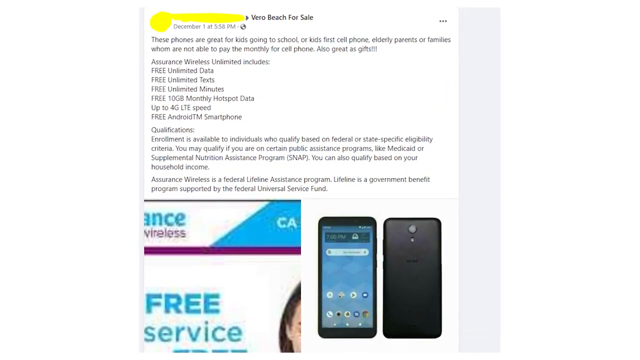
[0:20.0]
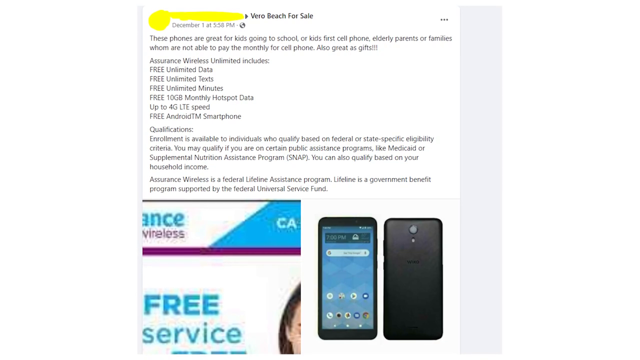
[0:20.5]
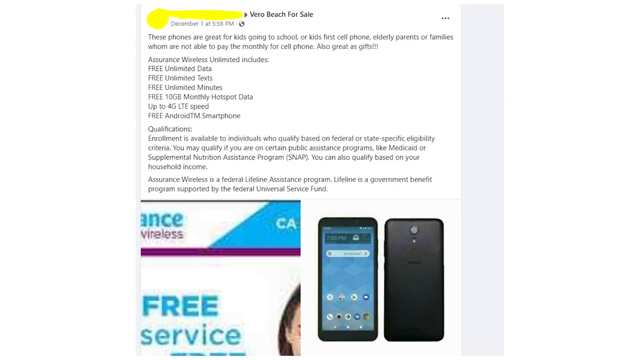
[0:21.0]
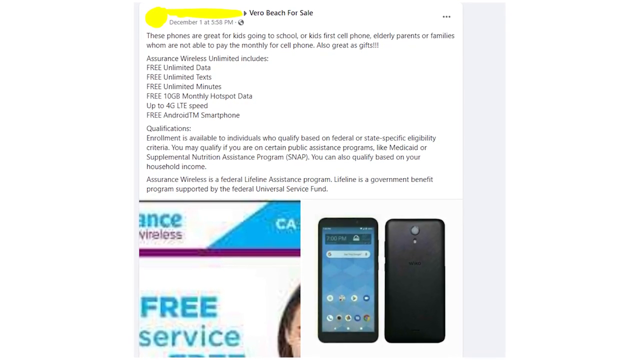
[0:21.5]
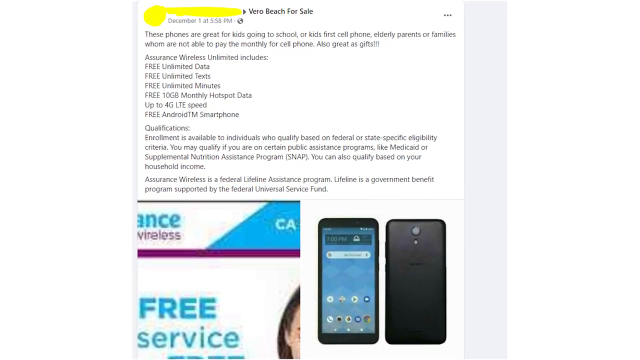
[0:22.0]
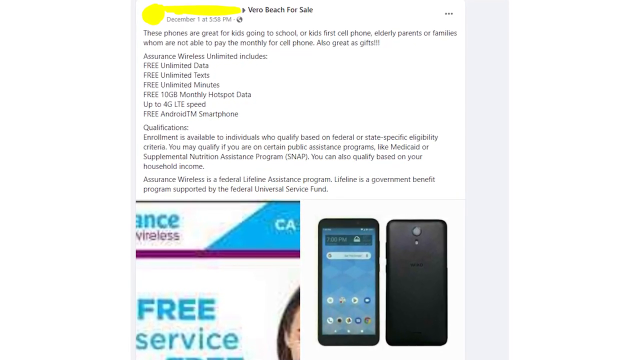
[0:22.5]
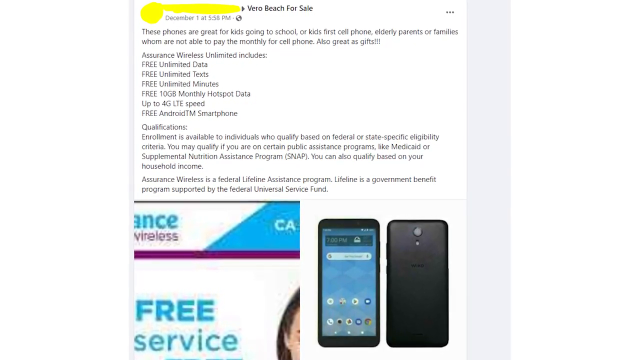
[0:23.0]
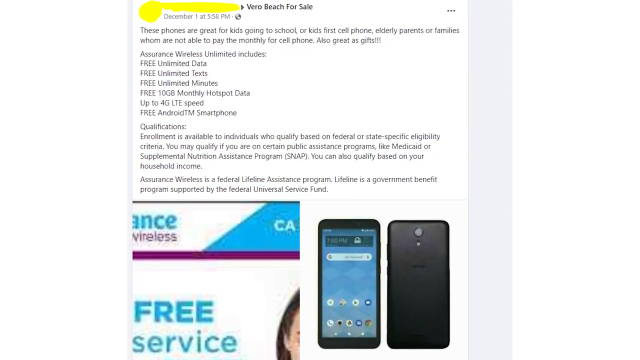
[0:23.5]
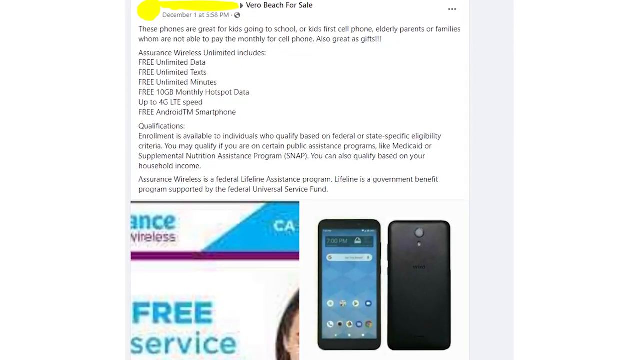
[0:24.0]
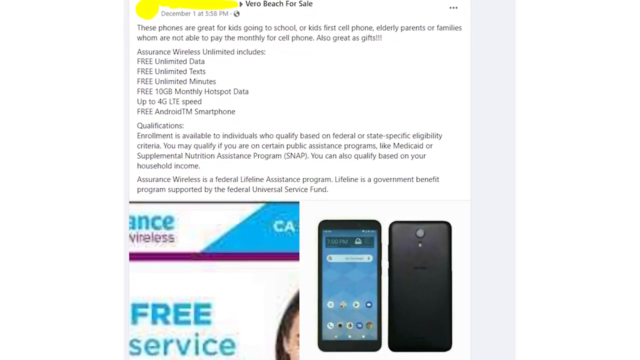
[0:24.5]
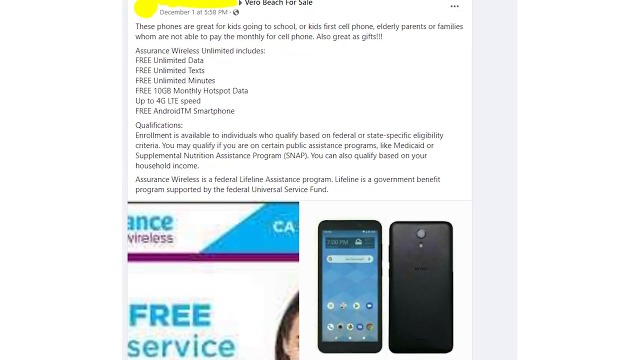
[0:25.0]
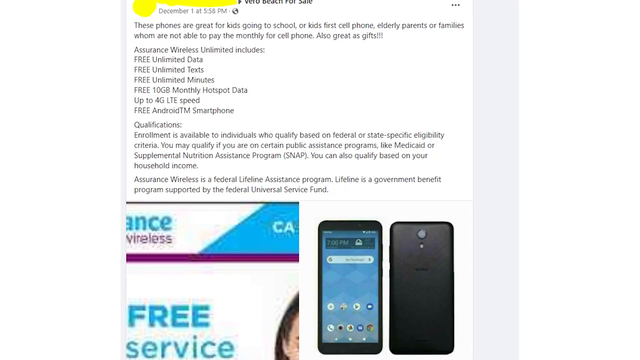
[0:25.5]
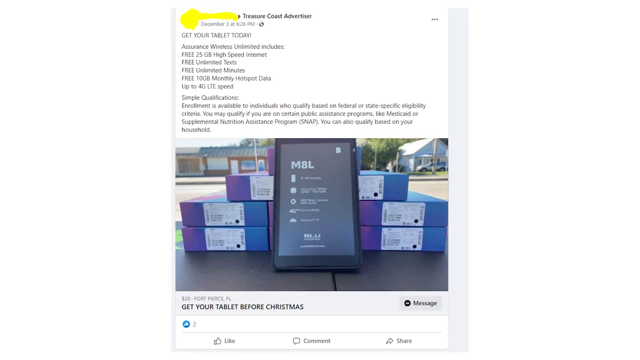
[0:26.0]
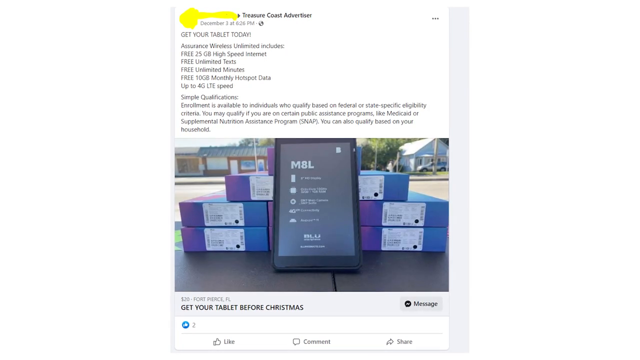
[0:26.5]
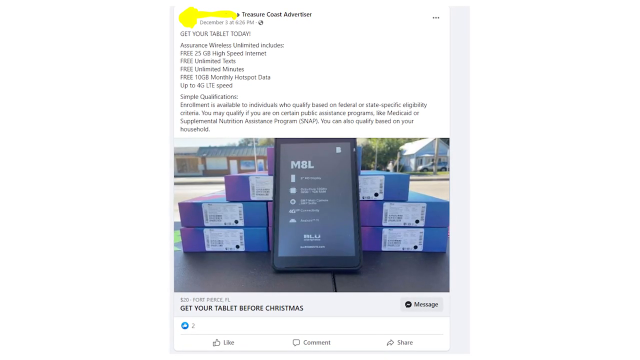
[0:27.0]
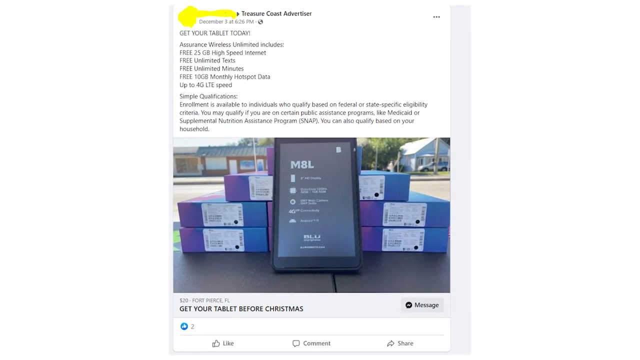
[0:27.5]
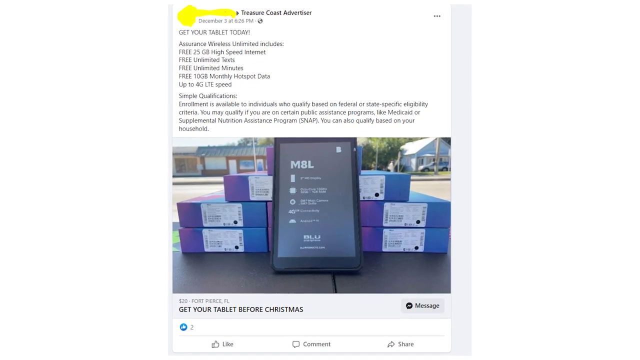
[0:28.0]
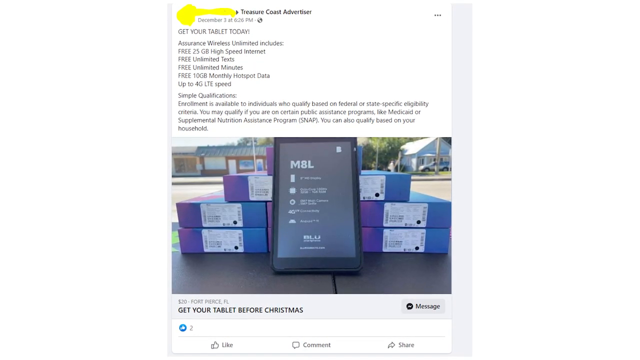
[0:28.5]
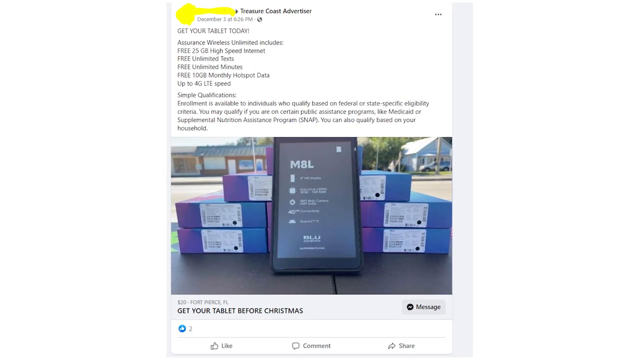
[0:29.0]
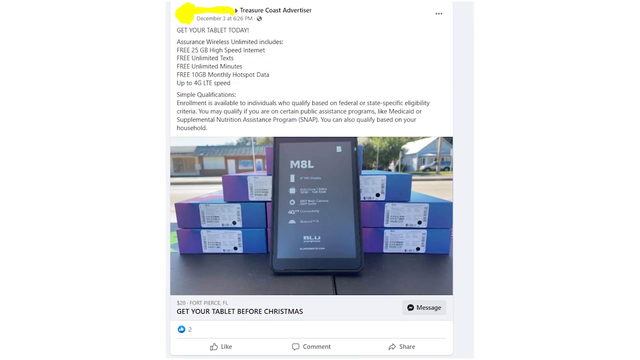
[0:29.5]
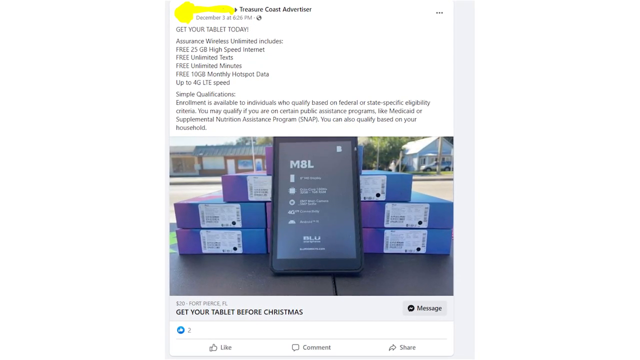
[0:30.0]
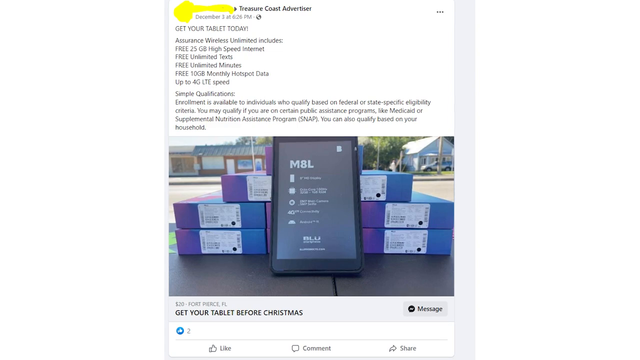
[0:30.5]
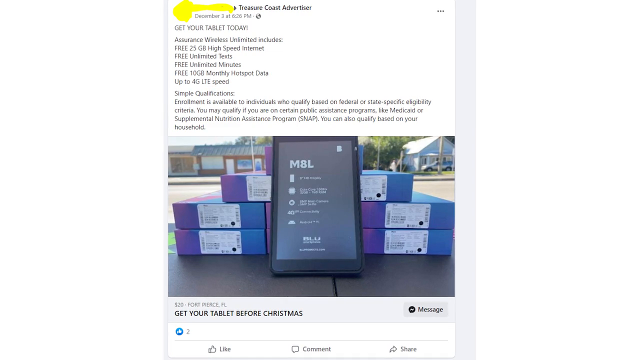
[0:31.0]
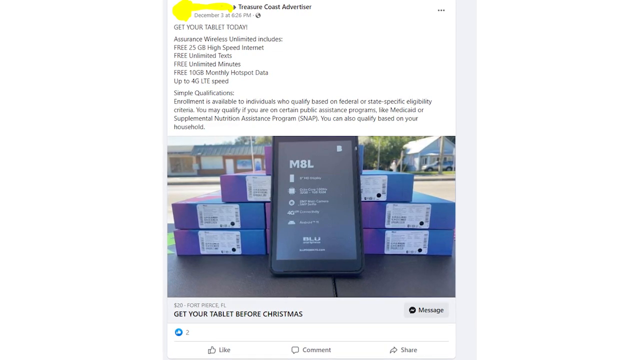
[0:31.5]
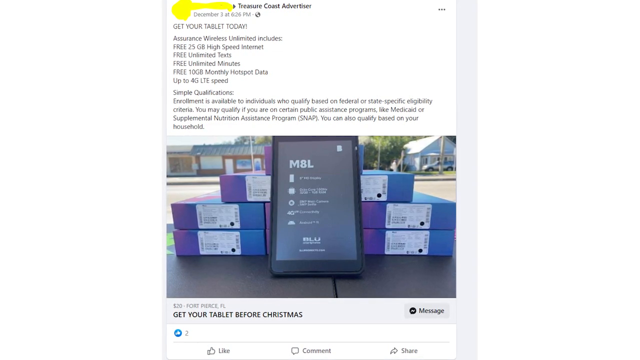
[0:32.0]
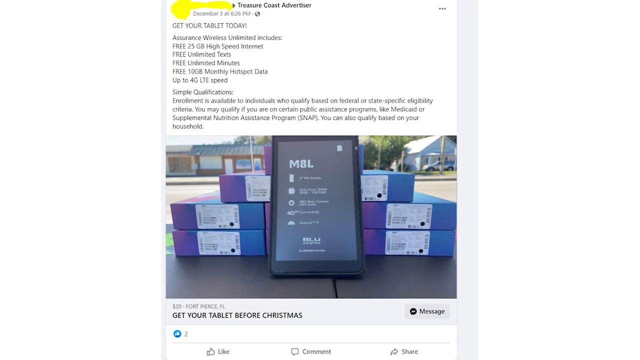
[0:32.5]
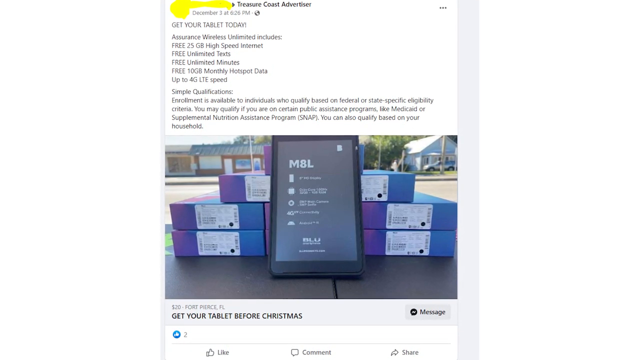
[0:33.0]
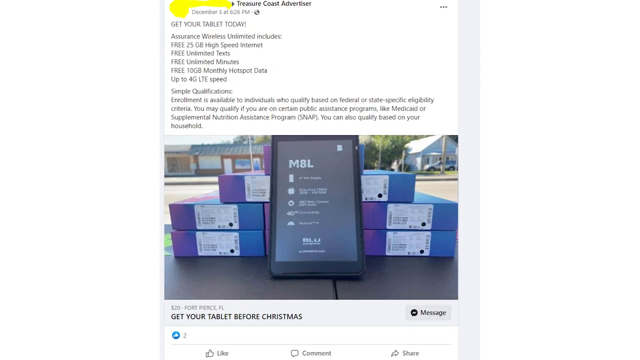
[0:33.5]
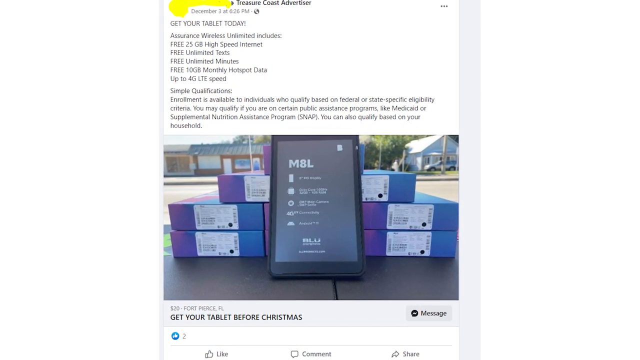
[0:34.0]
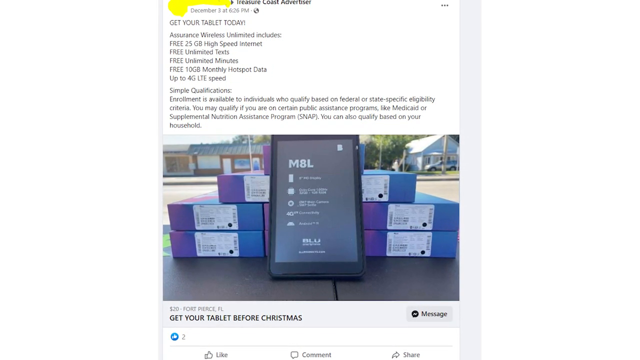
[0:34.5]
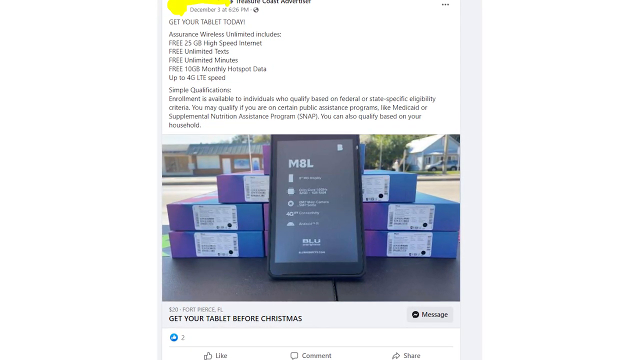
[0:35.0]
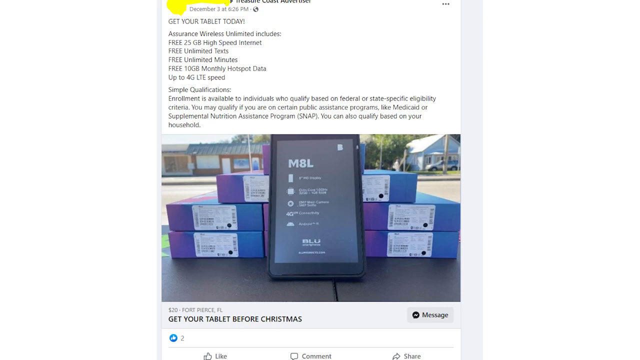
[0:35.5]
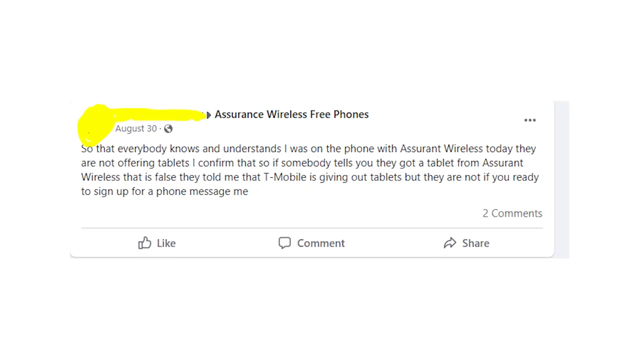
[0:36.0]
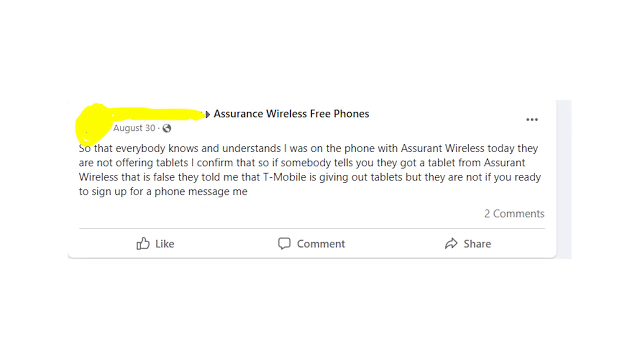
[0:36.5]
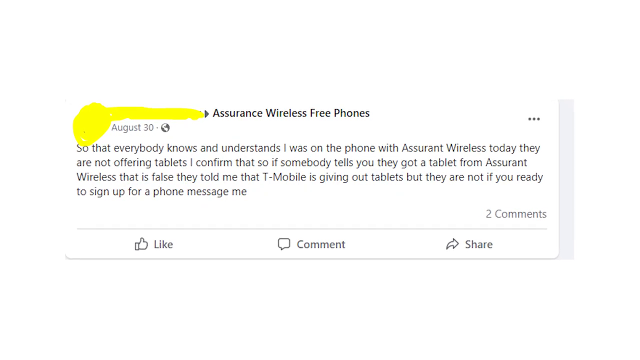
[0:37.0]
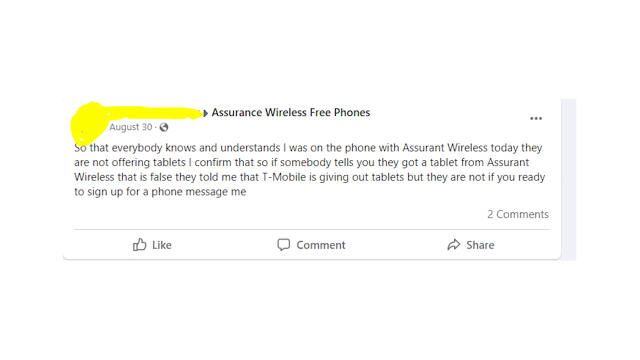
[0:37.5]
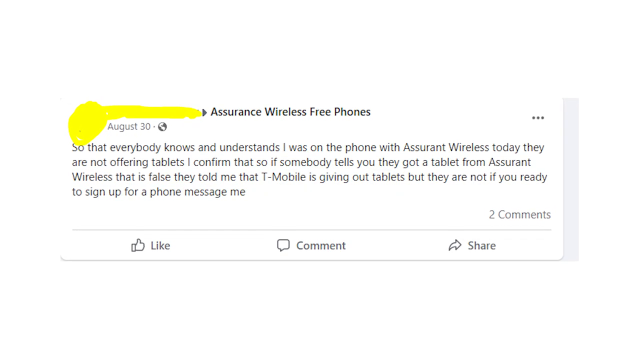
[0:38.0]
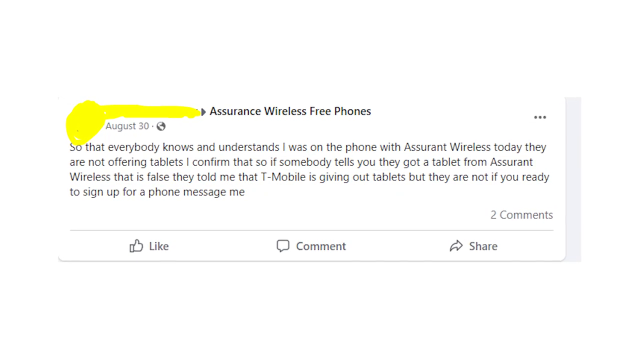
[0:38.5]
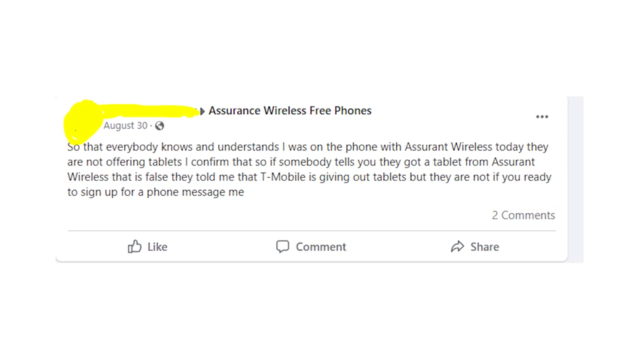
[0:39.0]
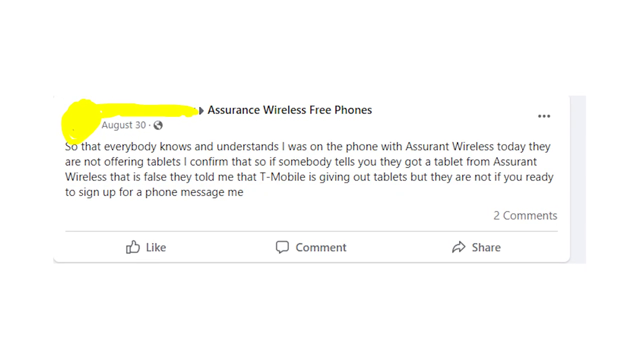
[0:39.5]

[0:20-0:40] The listing for the device contains several pieces of text about it: "These phones are great for kids going to school or kids' first cell phone, elderly parents or families who are not able to pay the monthly for cell phone. Also great as gifts!!!" It lists that Assurance Wireless Unlimited includes free unlimited data, free unlimited texts, free 10 gigabytes monthly hotspot data, up to 4G LTE speed, and a free Android smartphone. The page also lists the qualifications: enrollment is for individuals who qualify based on federal or state-specific eligibility criteria, people may qualify if they are on certain public assistance programs such as Medicaid or the Supplemental Nutrition Assistance Program (SNAP), or based on household income. It states that Assurance Wireless is a federal Lifeline assistance program and that Lifeline is a government benefit program supported by the Federal Universal Service Fund. A picture of the device's picture is on the left-hand side and the actual device laid out of the box is on the right-hand side.